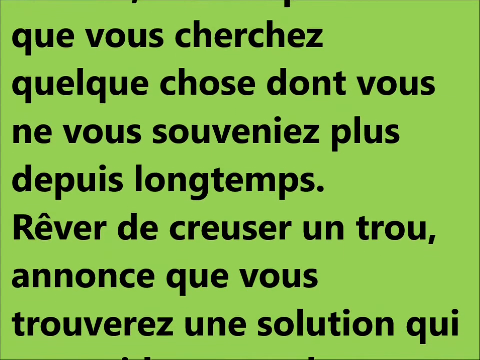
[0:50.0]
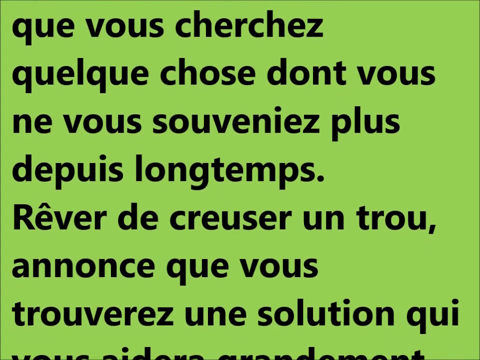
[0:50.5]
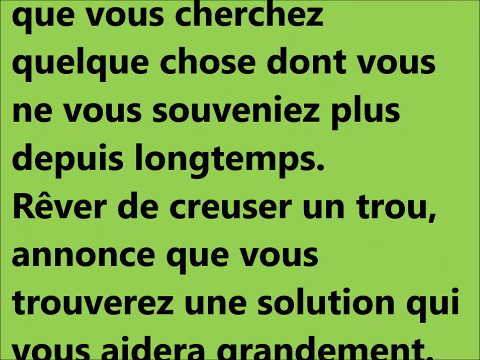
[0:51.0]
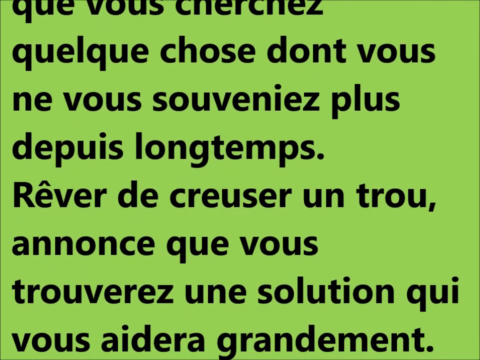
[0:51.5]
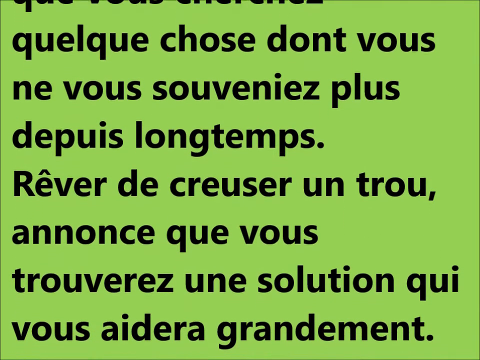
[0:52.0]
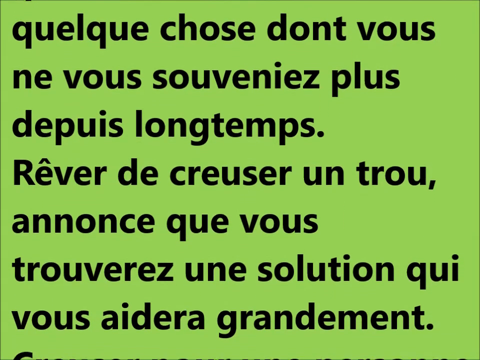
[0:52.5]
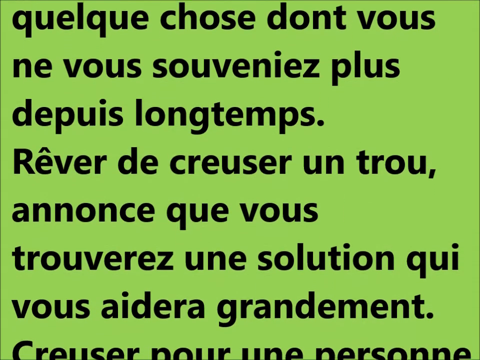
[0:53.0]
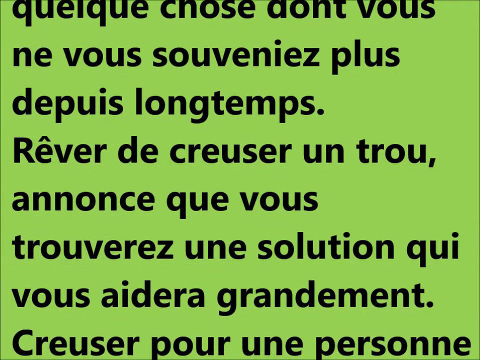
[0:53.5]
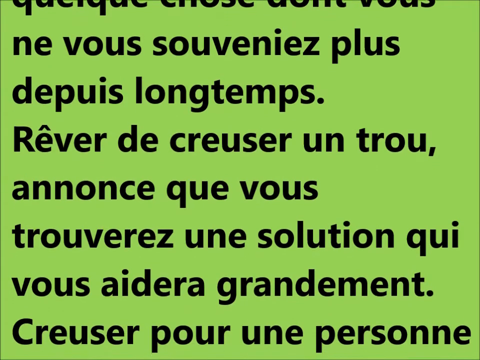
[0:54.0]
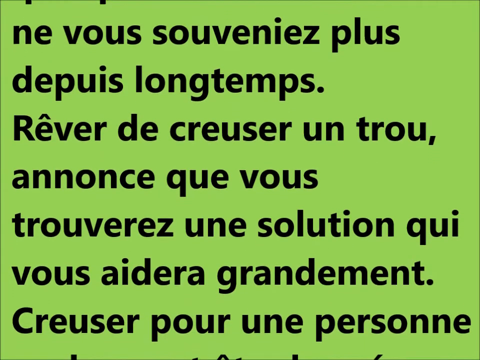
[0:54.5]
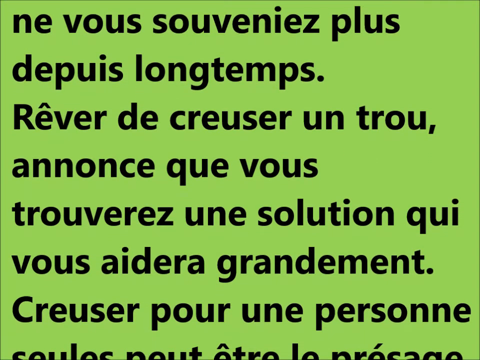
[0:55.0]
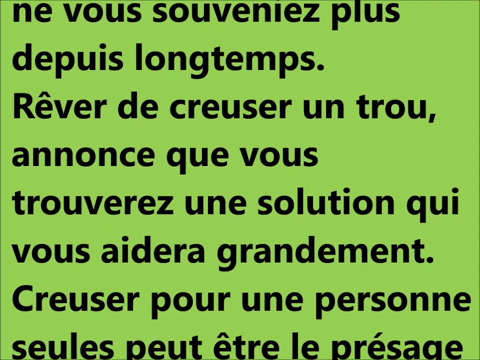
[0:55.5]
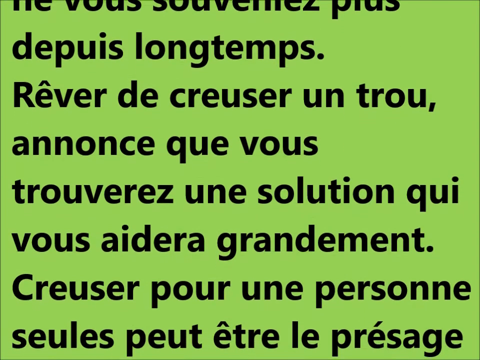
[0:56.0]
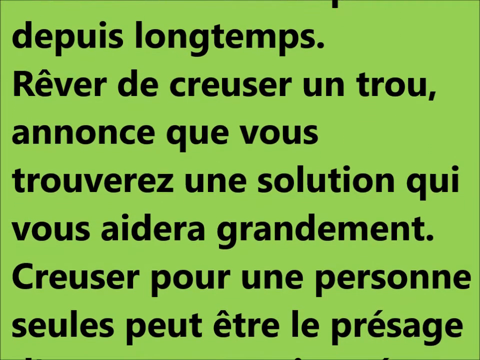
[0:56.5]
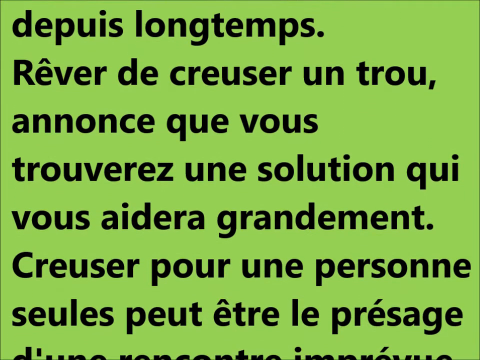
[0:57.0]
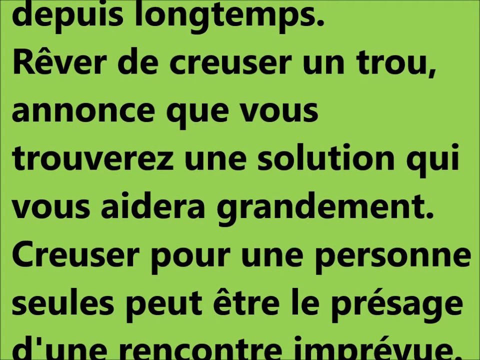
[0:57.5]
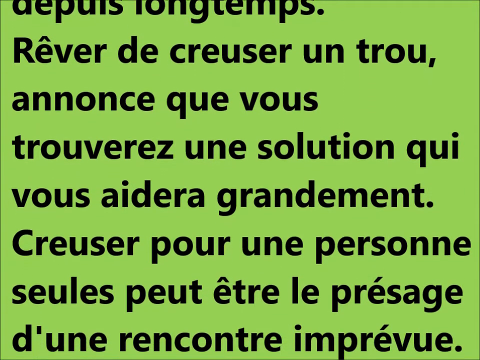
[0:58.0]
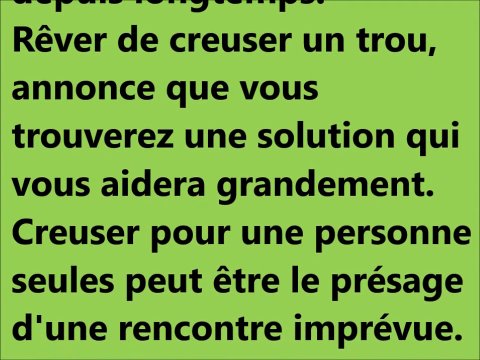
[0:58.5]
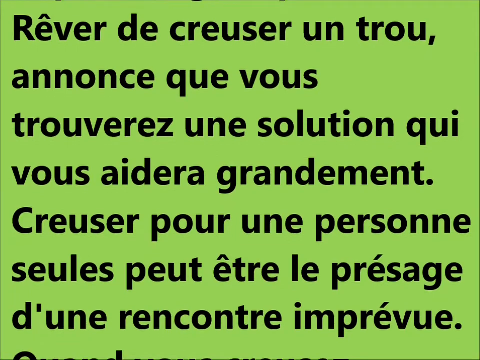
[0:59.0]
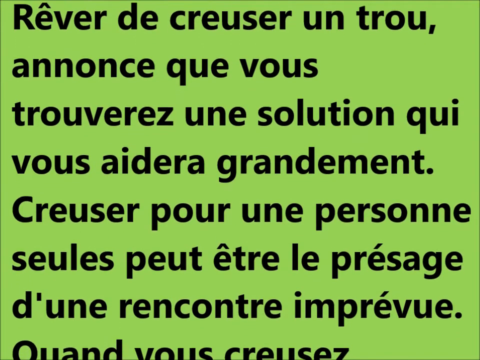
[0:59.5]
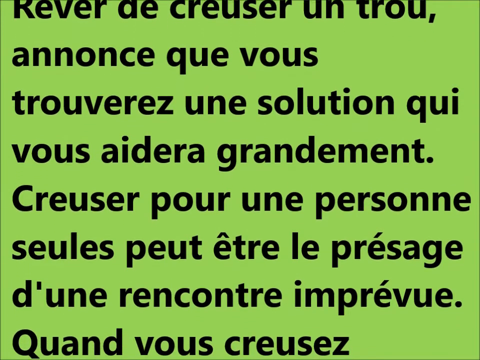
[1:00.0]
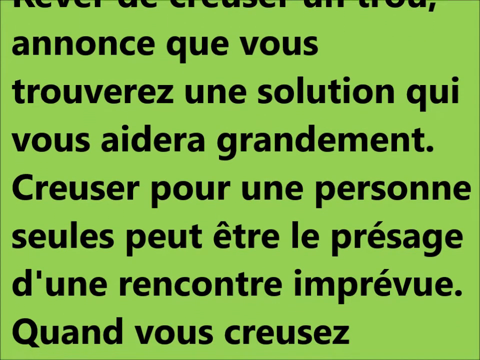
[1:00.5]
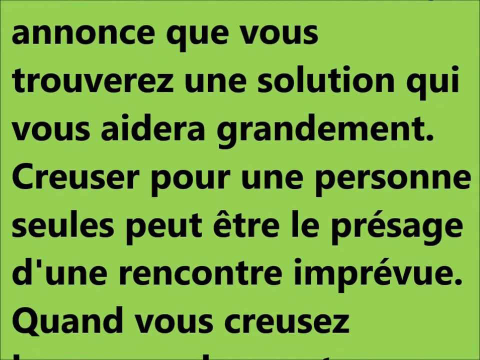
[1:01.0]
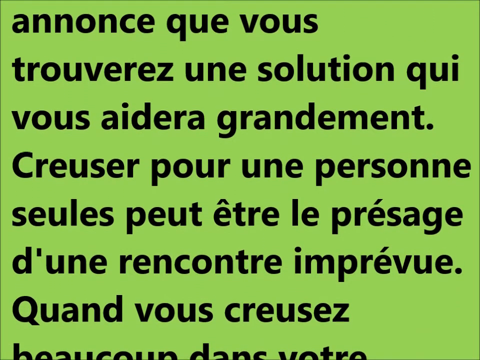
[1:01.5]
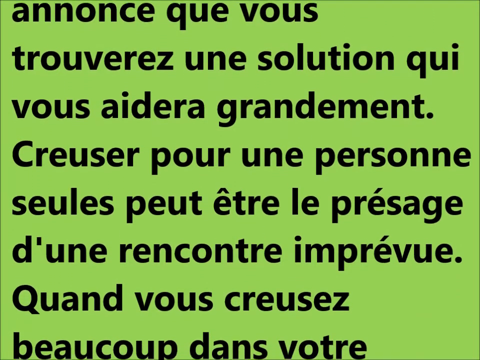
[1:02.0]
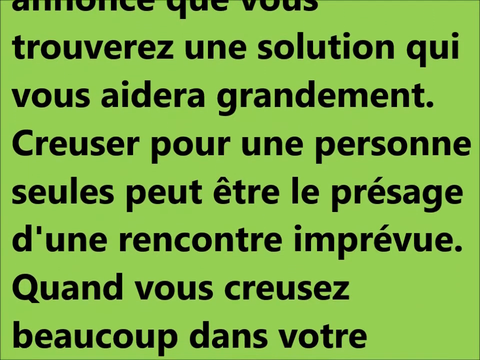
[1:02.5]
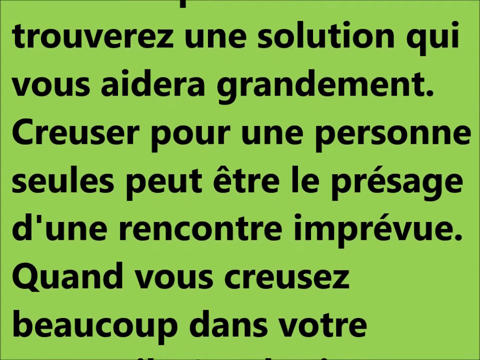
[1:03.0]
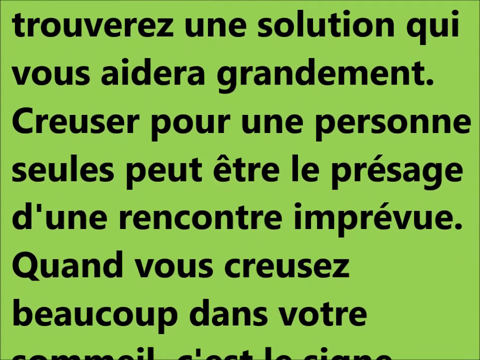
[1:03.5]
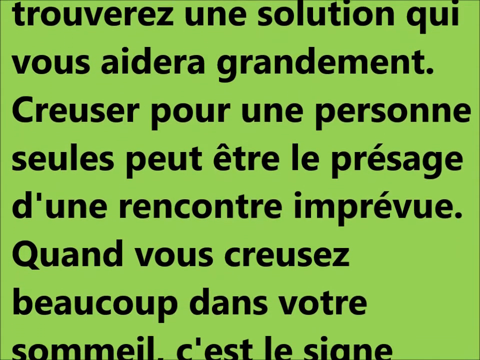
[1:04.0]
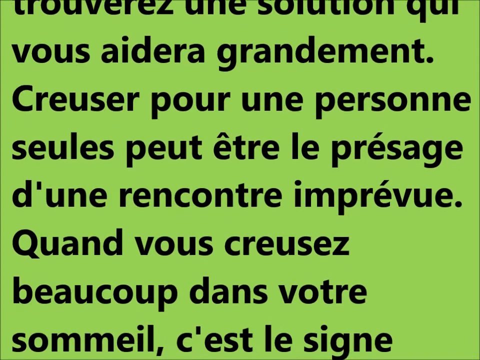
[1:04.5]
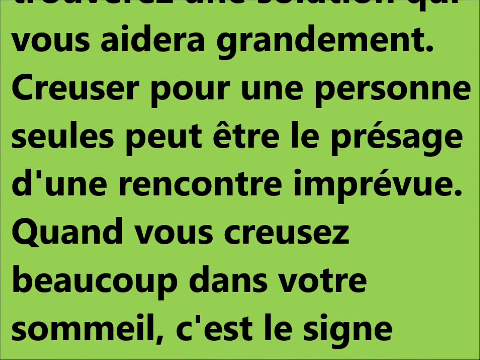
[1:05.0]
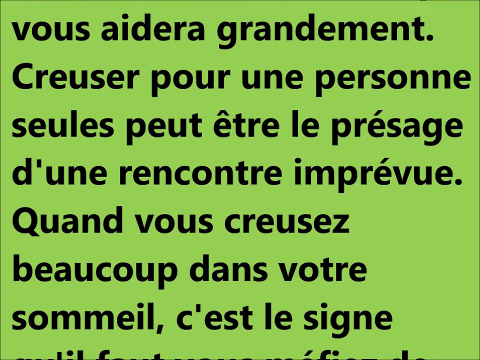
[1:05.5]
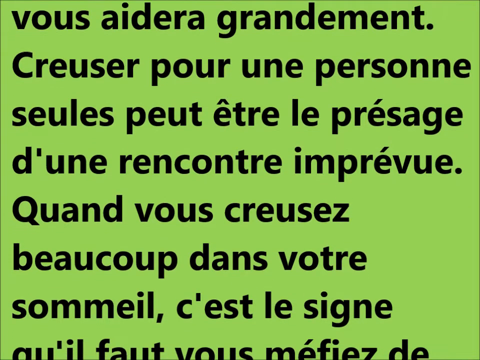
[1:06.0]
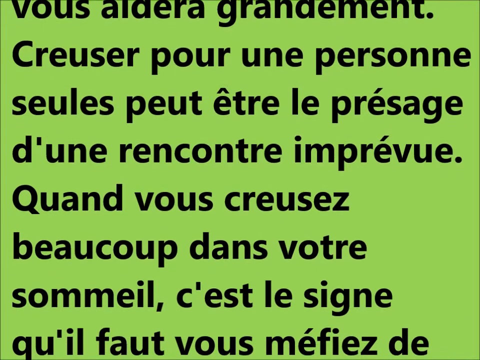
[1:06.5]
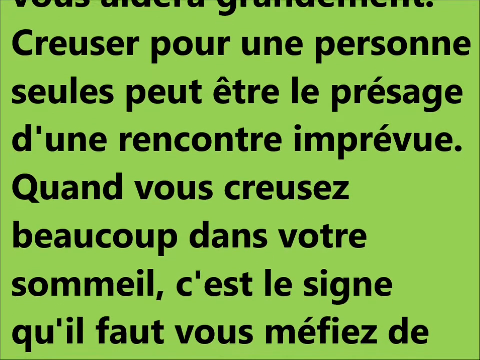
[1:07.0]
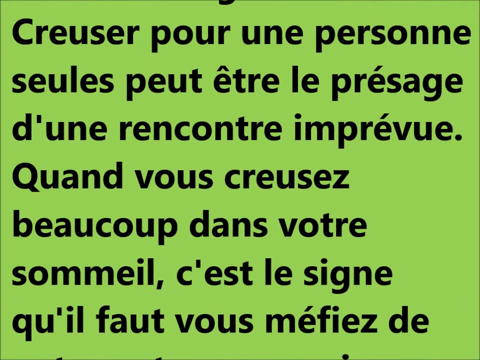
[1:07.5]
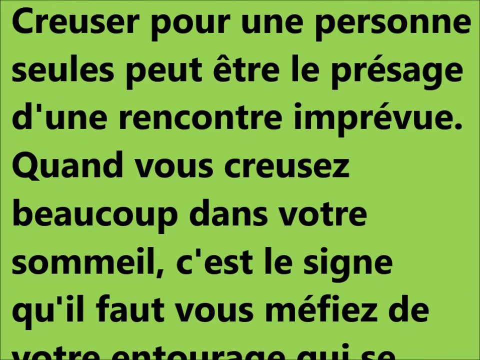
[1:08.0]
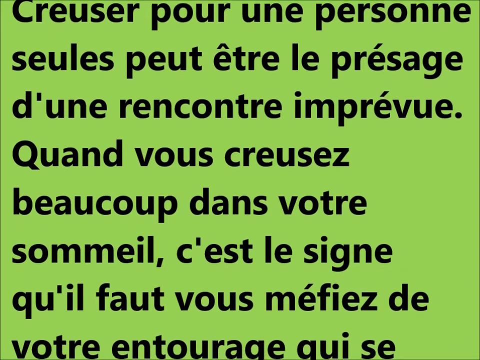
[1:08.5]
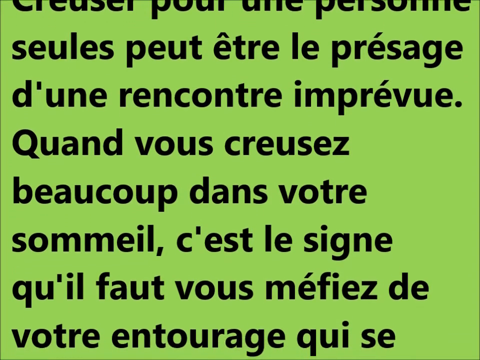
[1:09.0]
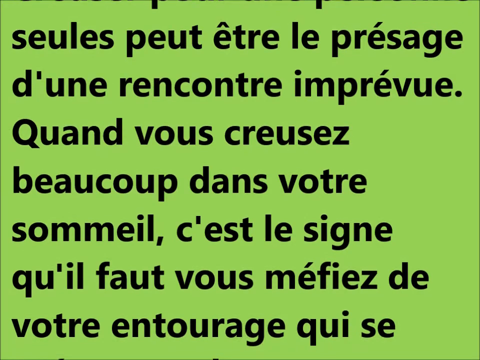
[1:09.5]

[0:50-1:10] Text on the screen describes a particular type of dream, the rêve de creuser: a dream with deep meaning and significance to the dreamer, one that solves a problem or answers a question, shedding light on a truth sought for a long time. The visuals are entirely computer-generated, with no real-world setting and no real-life beings shown.